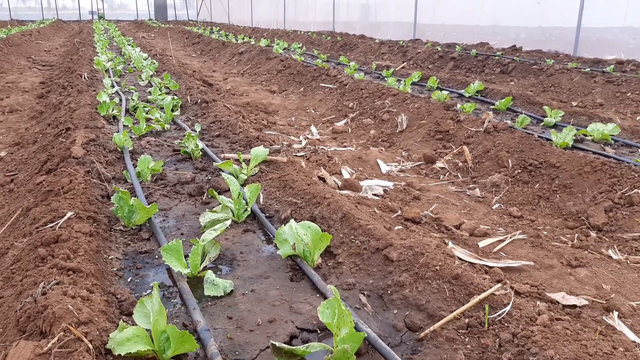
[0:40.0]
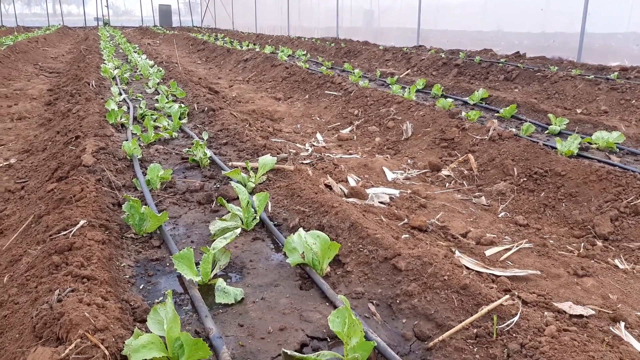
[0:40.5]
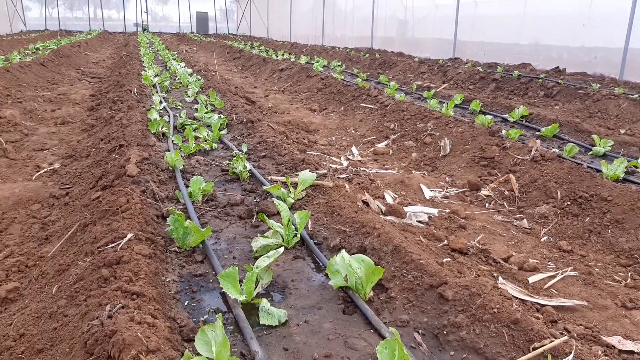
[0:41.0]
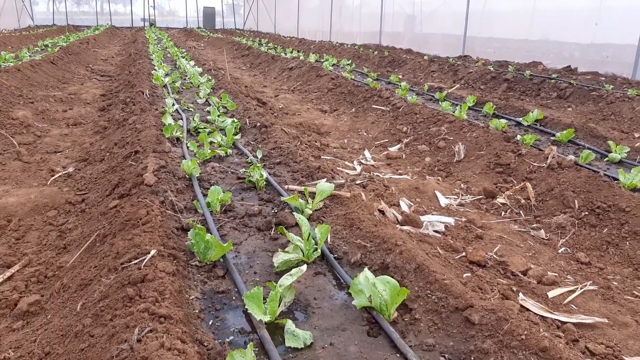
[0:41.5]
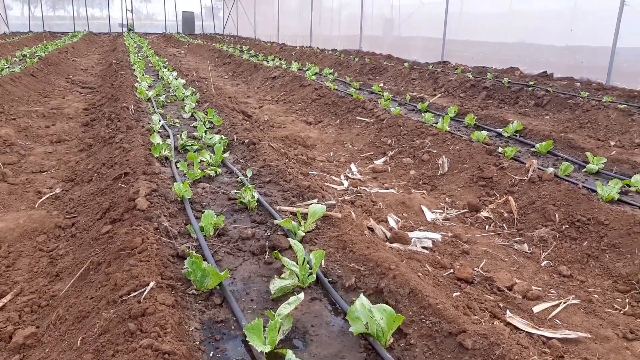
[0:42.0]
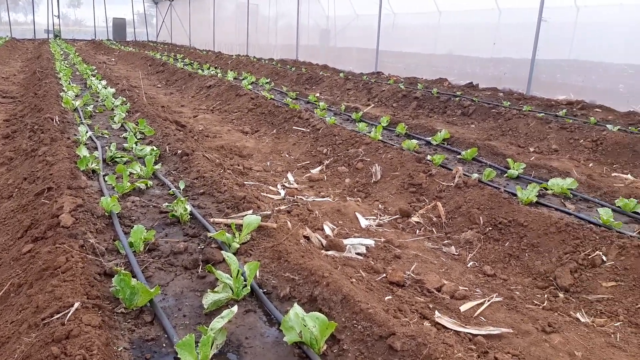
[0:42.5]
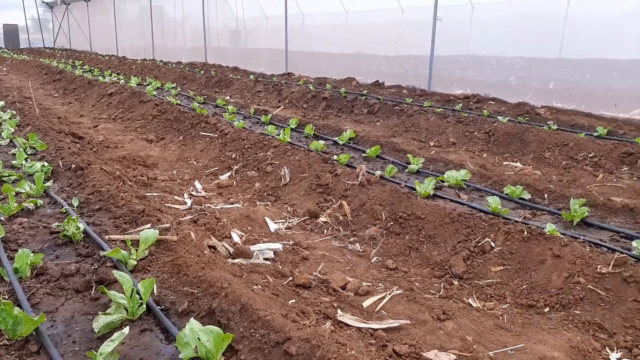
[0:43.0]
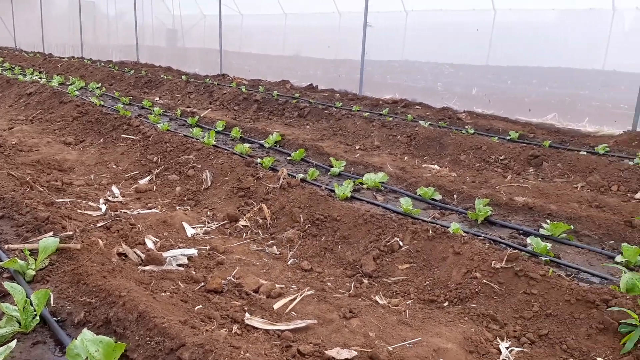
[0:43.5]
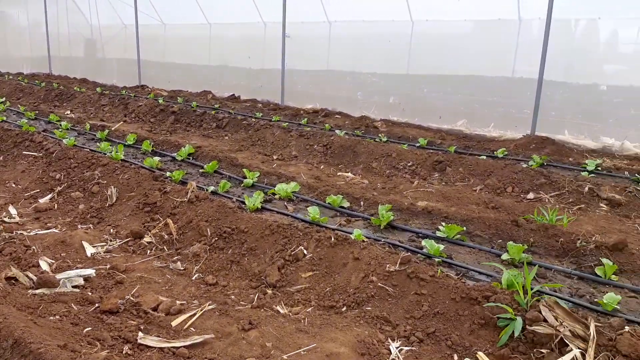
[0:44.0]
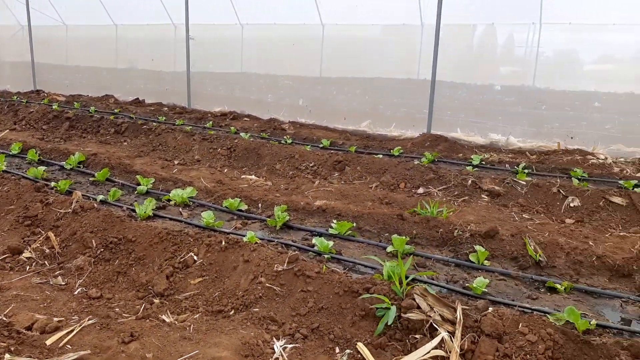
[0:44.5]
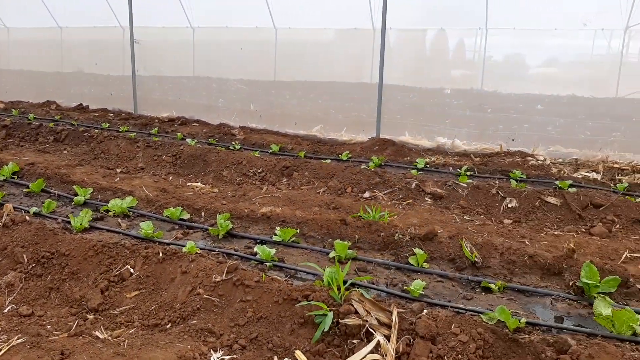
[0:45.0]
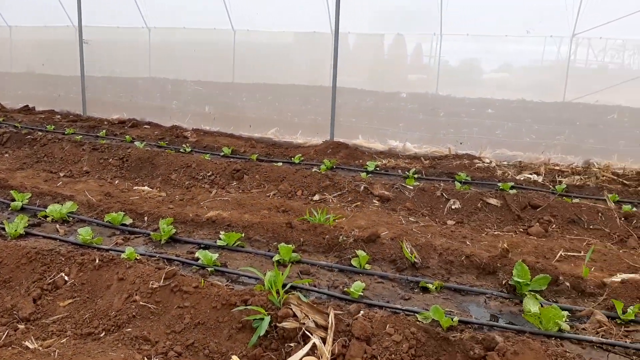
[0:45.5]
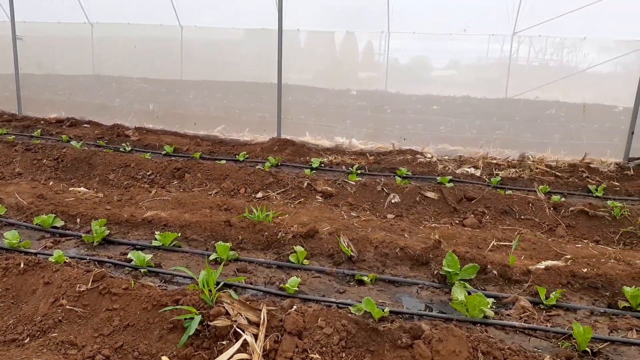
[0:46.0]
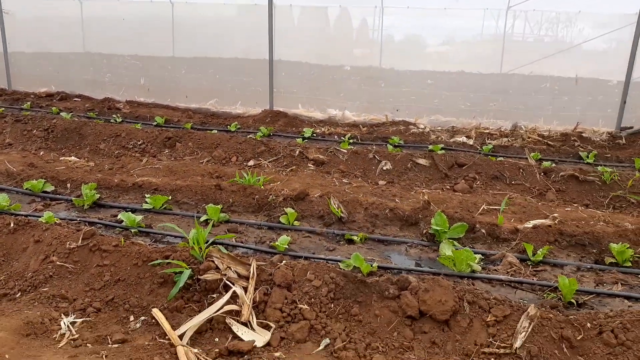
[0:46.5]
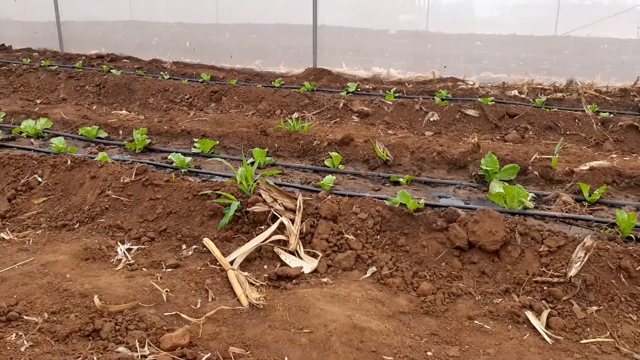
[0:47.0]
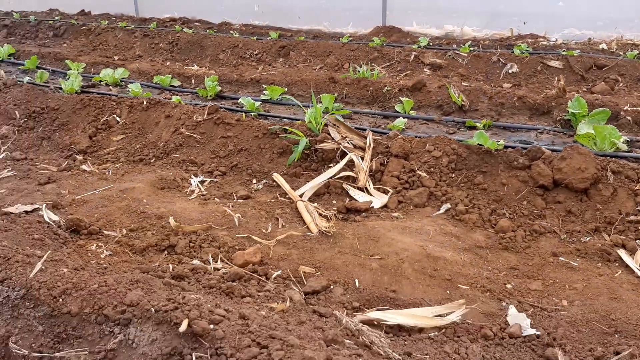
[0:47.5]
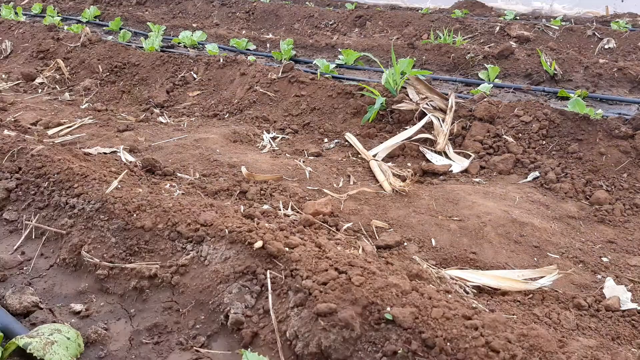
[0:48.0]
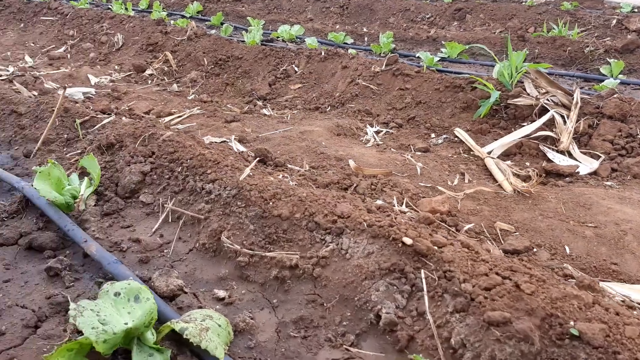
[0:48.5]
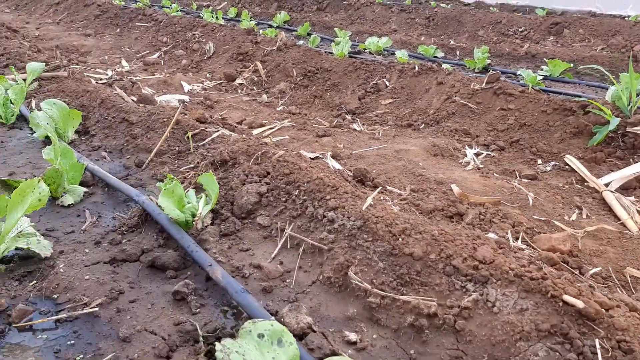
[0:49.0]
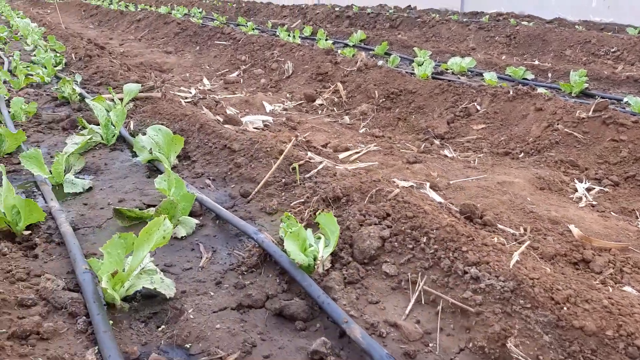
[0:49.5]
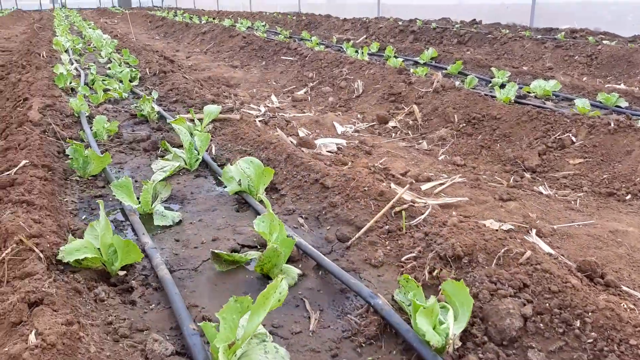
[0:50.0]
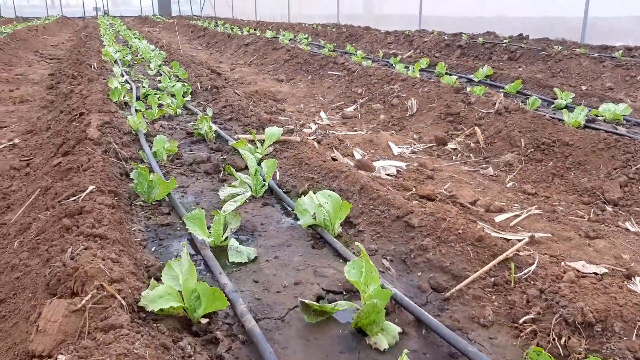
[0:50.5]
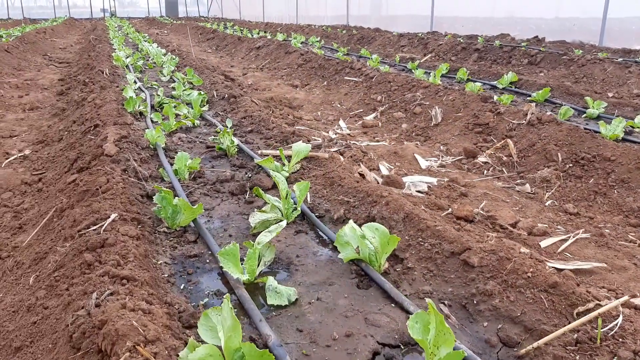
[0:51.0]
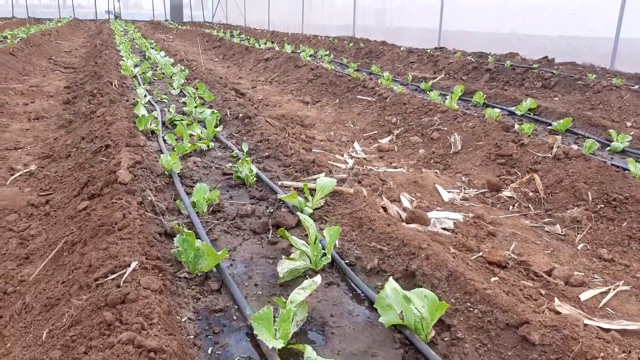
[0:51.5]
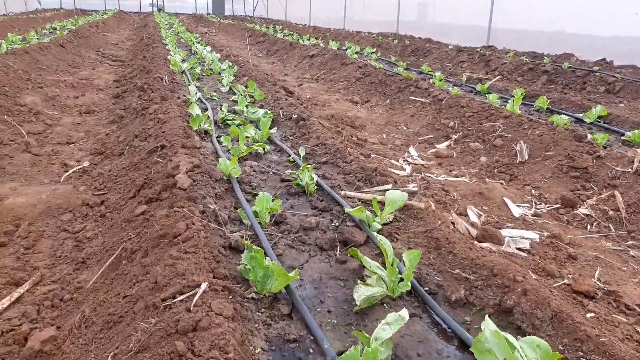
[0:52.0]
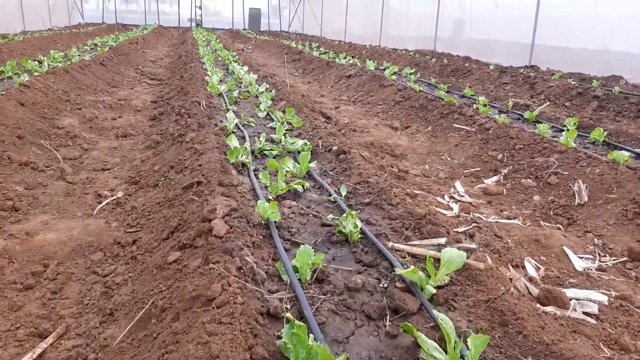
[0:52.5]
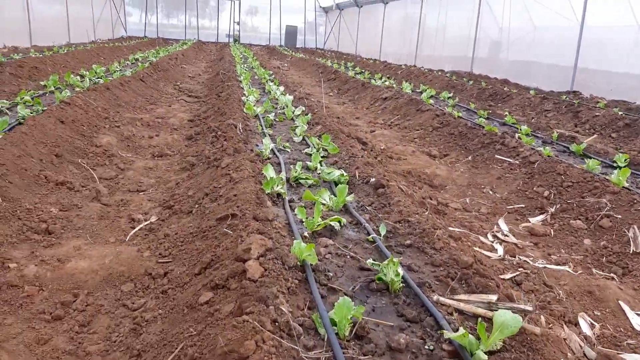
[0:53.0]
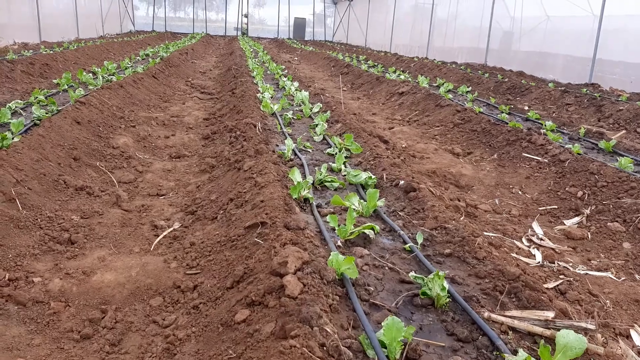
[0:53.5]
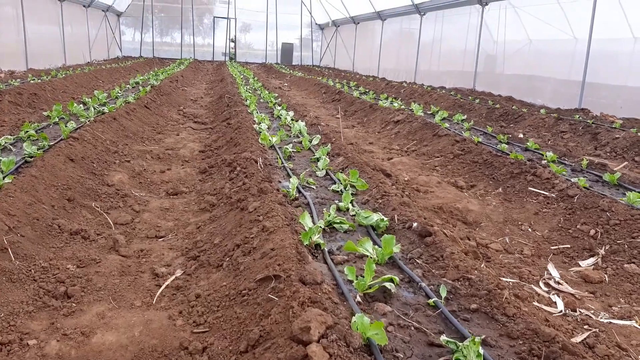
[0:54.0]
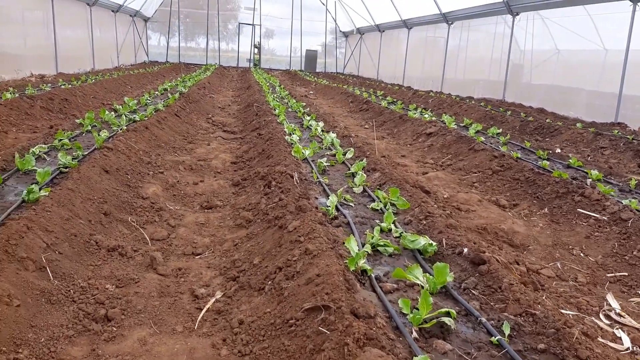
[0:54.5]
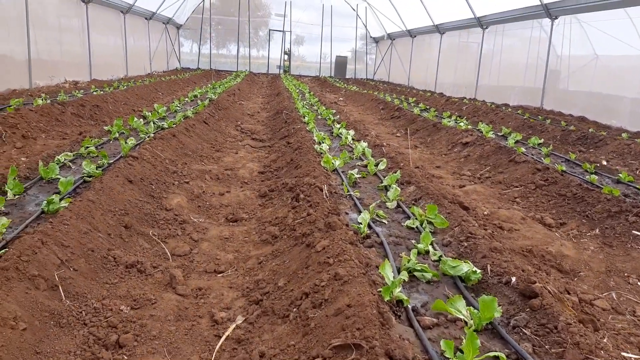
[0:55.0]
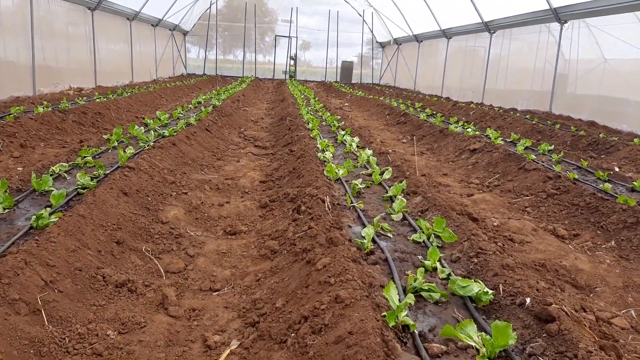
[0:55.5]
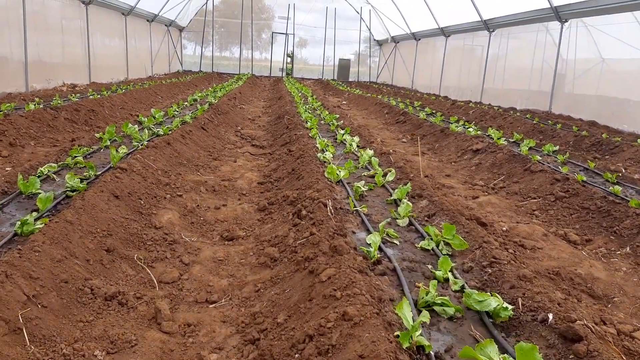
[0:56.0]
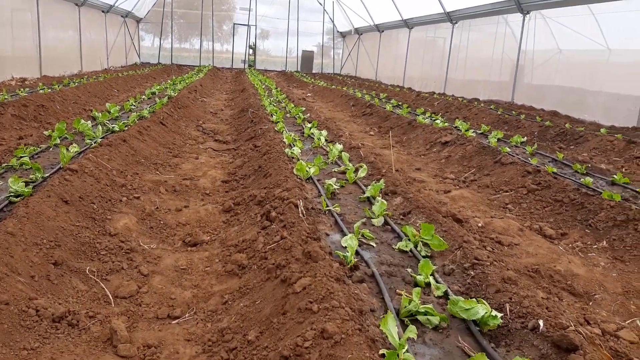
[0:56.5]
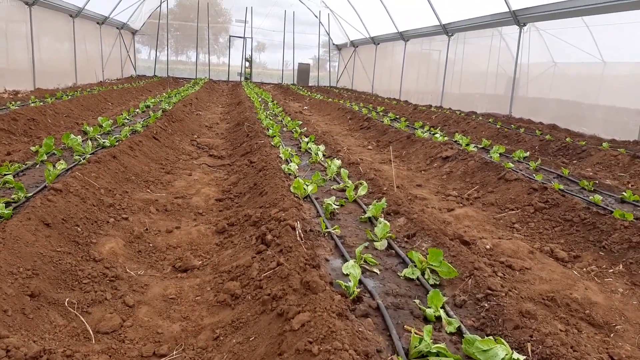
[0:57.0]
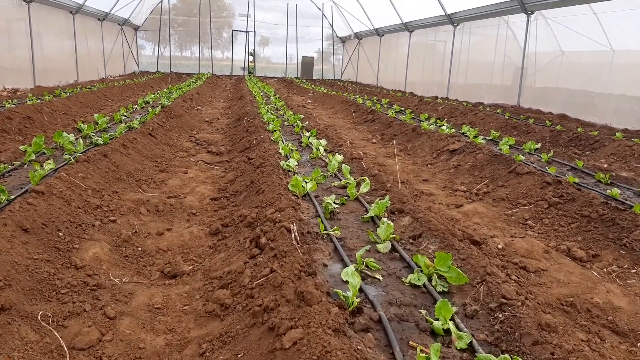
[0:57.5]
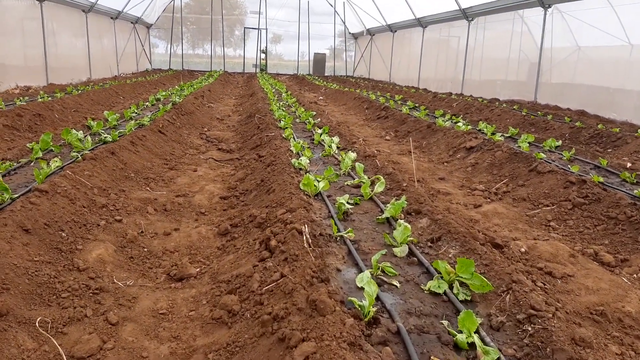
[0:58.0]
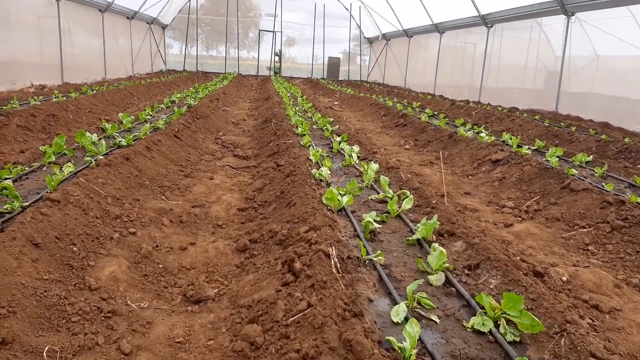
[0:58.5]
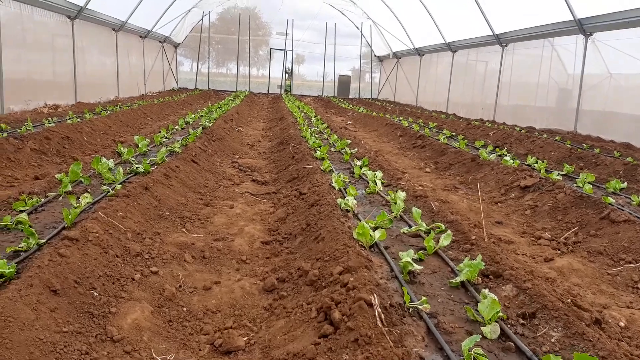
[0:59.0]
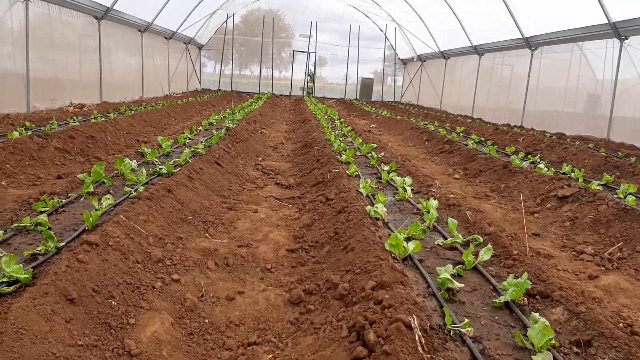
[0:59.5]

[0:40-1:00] Inside a nursery or greenhouse, the cameraman holds the camera and takes slow, small steps down its length. Four rows of vegetation are planted, all appearing to be the same plant, with the same appearance, leaf shape and size, no larger than four inches each. The rows are lined with black plastic lining of the kind used to deter weeds. Between the rows of seedlings there are rows of dark brown dirt, four in all, separating the planted rows. The inside of the greenhouse is well lit. It is daytime outside; it is unclear whether it is raining, but the day appears dreary rather than sunny. The poles on the inside of the greenhouse that make up its structure are visible. At the other end of the greenhouse there is a door, and the cameraman walks in that direction.